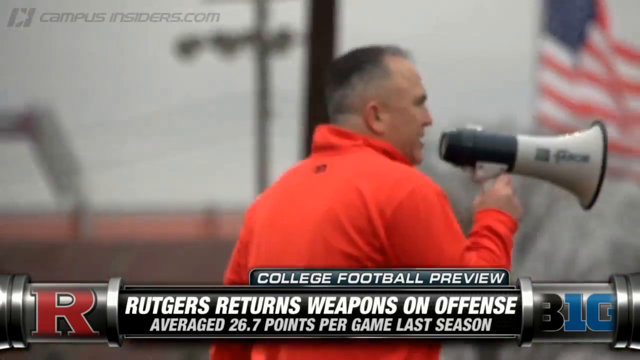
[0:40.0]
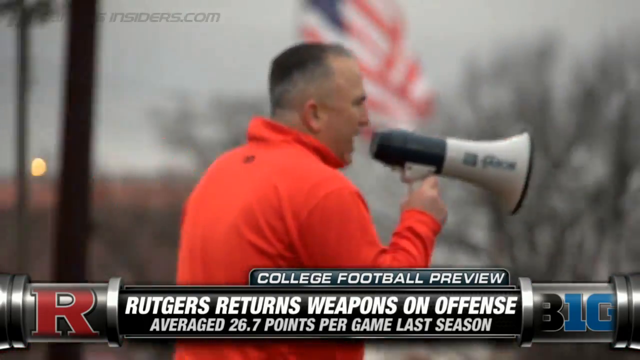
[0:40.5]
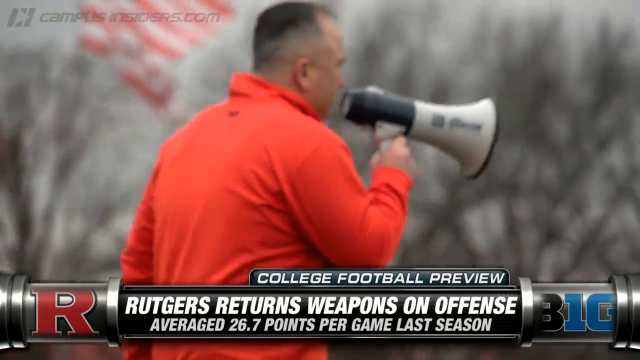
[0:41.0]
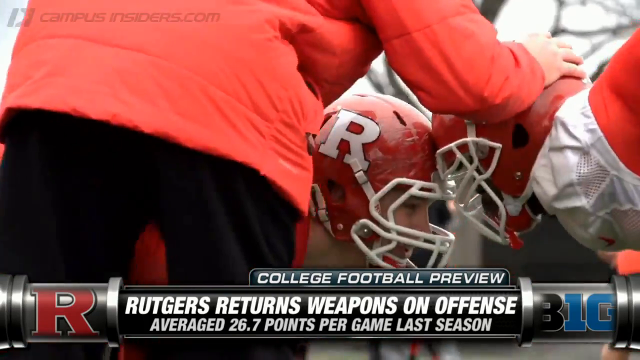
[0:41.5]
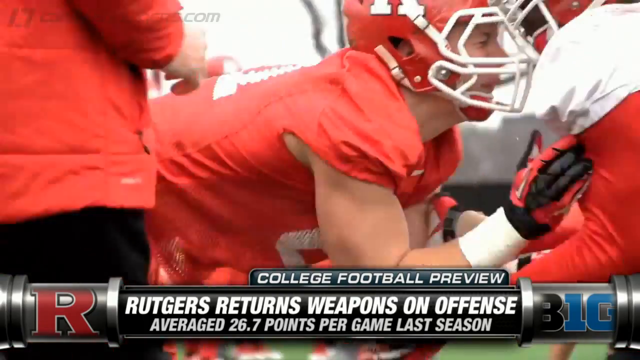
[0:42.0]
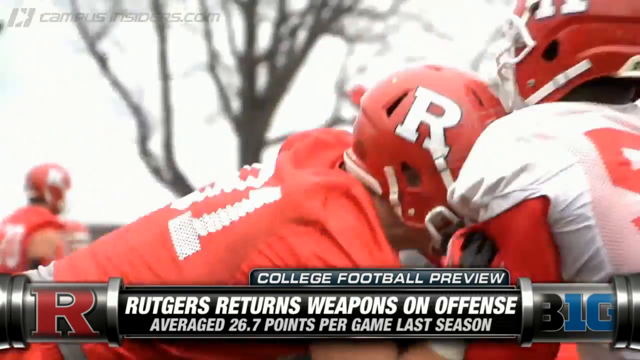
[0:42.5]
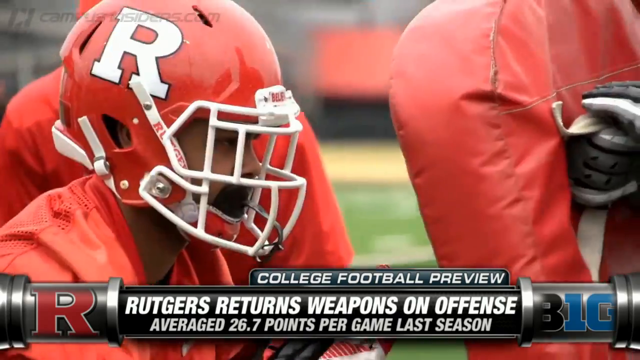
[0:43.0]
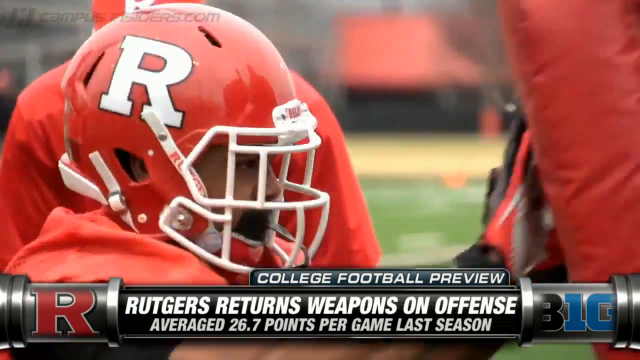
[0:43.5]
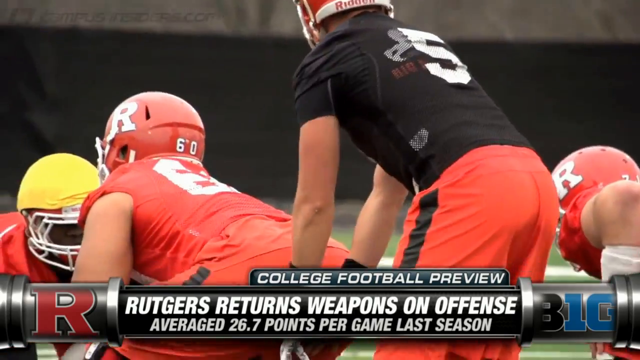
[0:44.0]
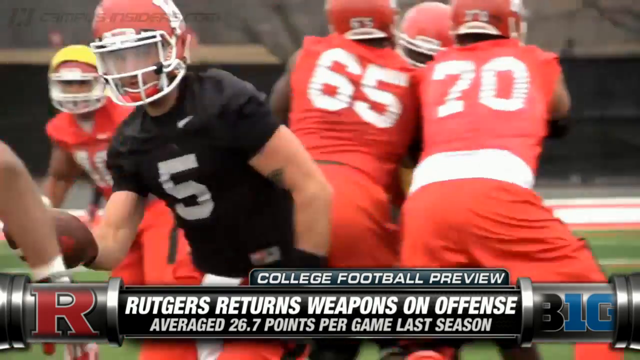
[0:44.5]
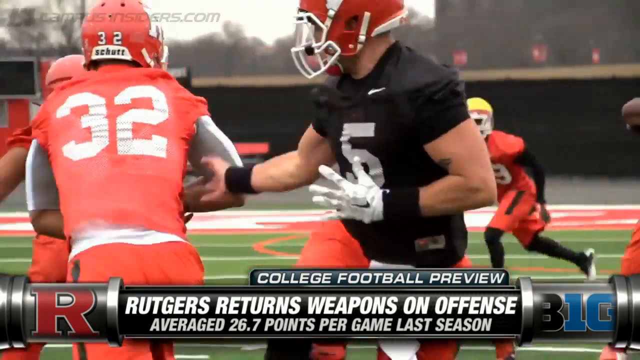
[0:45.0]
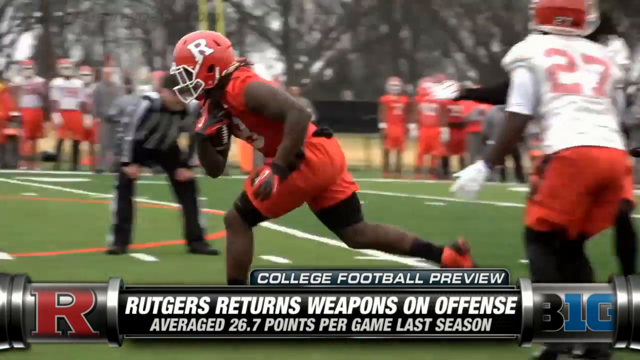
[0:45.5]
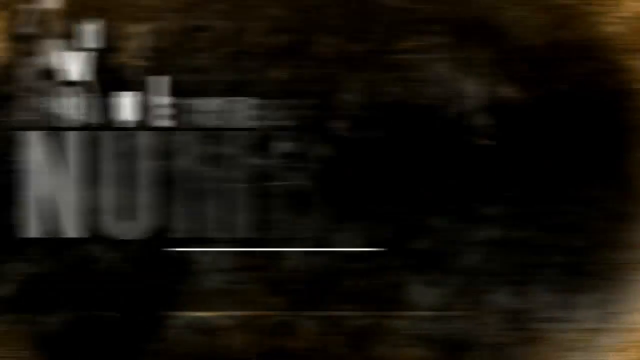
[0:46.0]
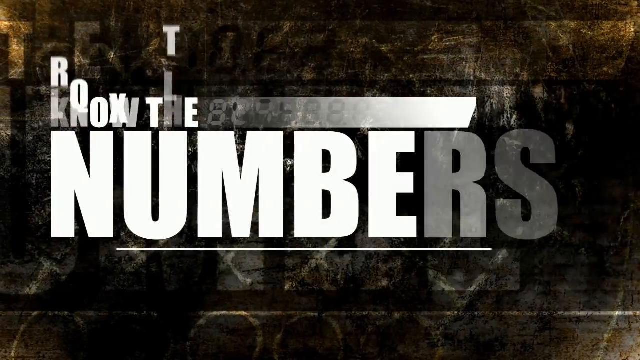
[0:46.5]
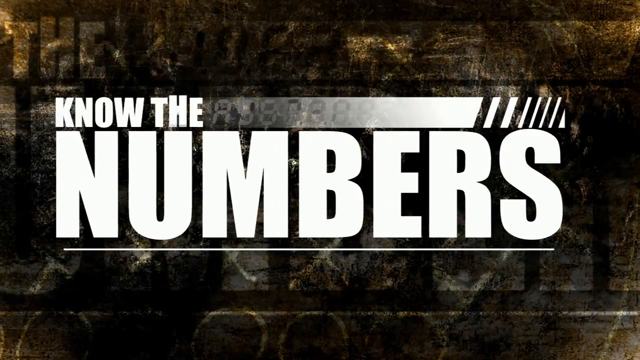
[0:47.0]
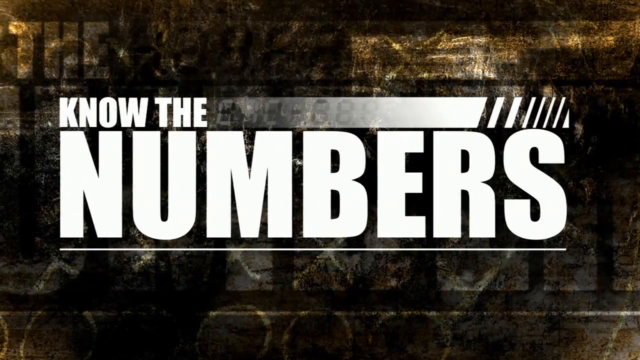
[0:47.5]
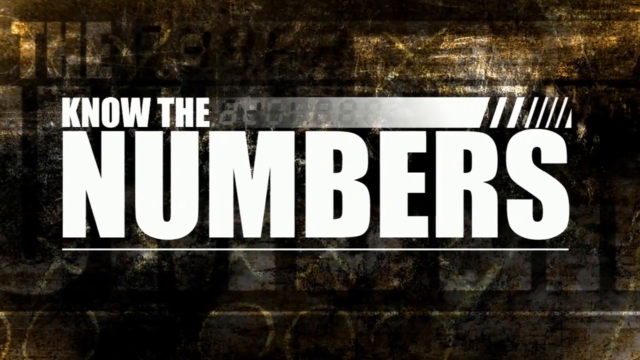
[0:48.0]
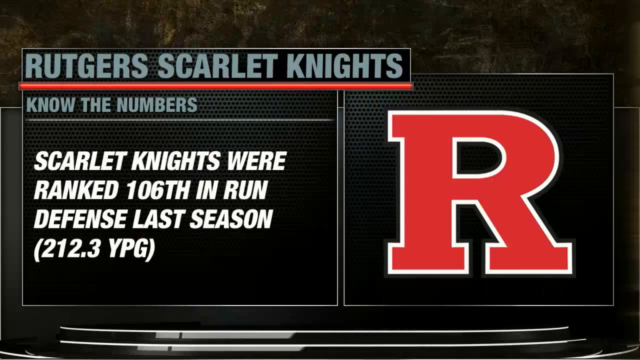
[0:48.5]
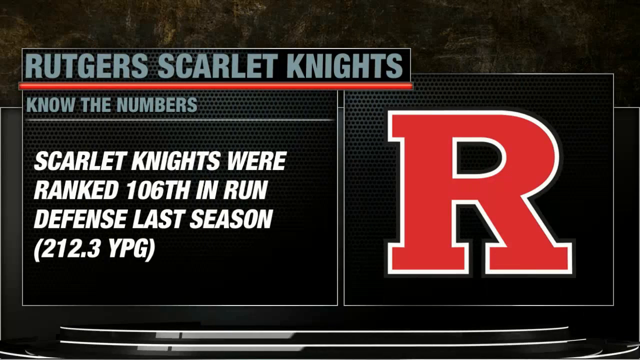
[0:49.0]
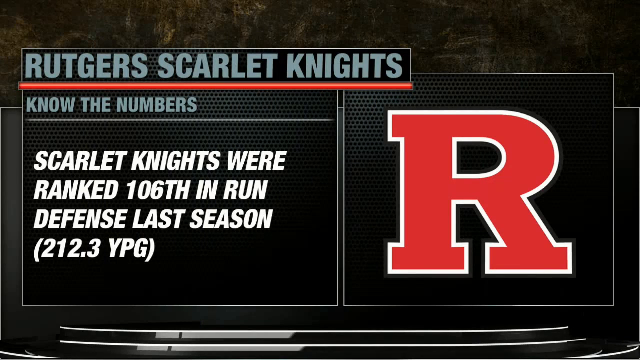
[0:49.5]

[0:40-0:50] From the coach yelling into a megaphone, the video cuts to more shots of linemen pushing against each other at the line of scrimmage, and another player pushing into a practice dummy. The quarterback, number 5 in a black jersey, receives a snap from his lineman or center. The opposing defensive player has something yellow over his helmet, indicating some sort of special status. The quarterback hands off to number 32, who begins to run down the field. The video cuts to a graphic in the same style as the earlier graphics reading "Know the Numbers," then advances to another graphic with text on the left and the simple R Rutgers logo on the right. It reads "Rutgers Scarlet Knights, Know the Numbers. Rutgers Scarlet Knights were ranked 106th in run defense last season, 212.3 YPG."